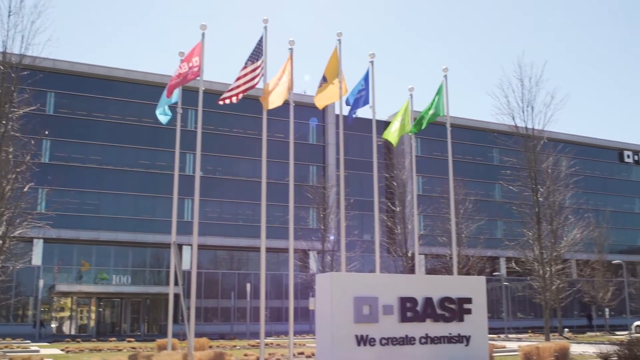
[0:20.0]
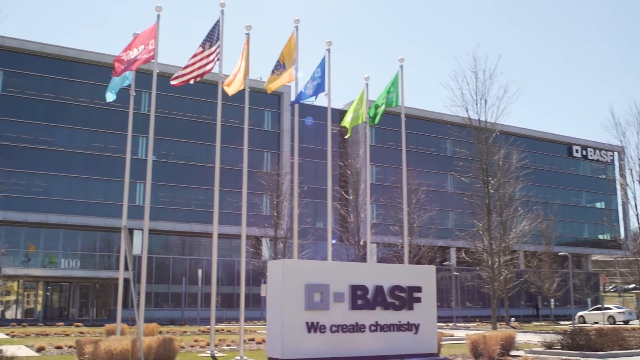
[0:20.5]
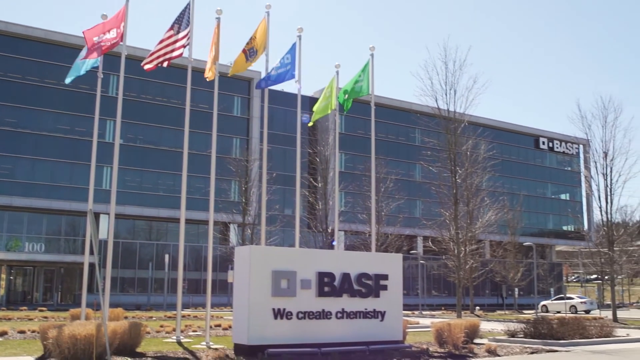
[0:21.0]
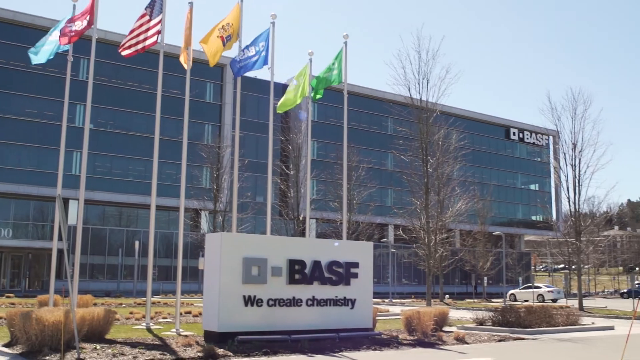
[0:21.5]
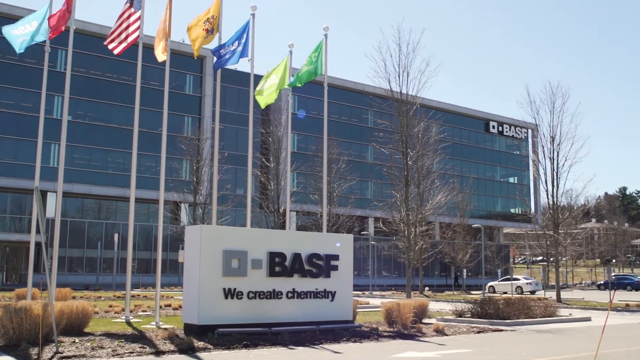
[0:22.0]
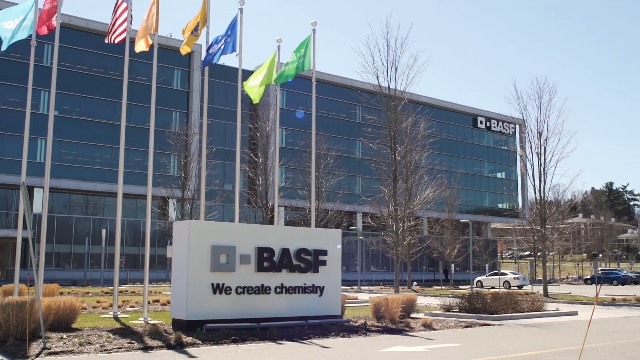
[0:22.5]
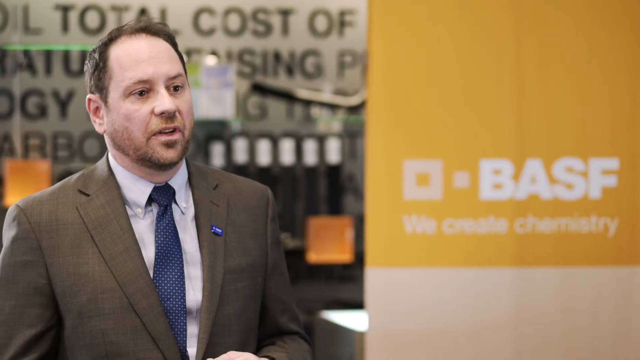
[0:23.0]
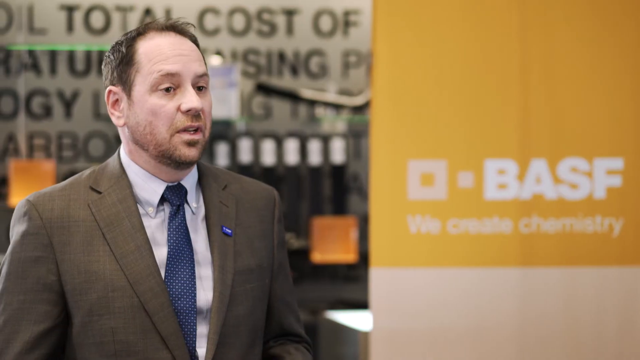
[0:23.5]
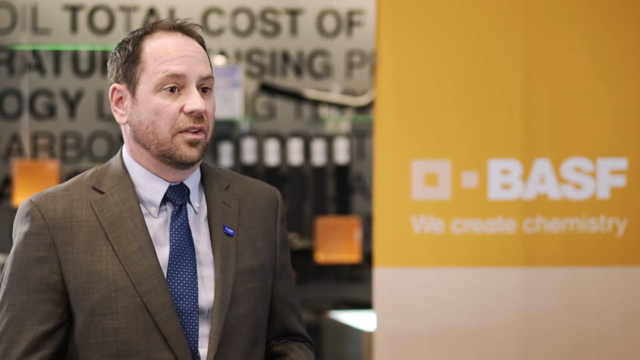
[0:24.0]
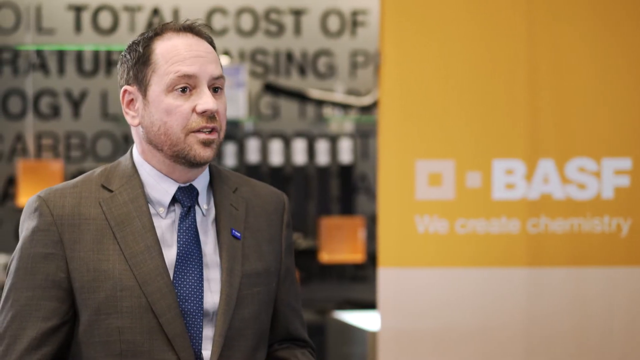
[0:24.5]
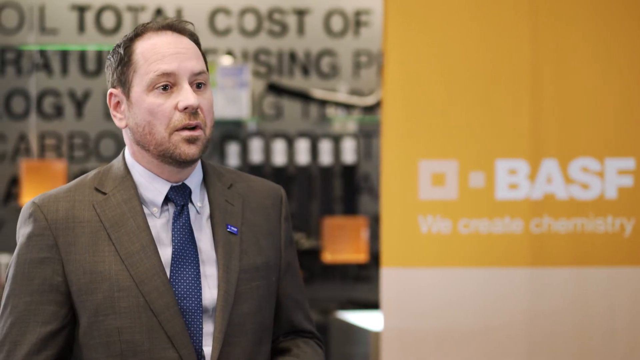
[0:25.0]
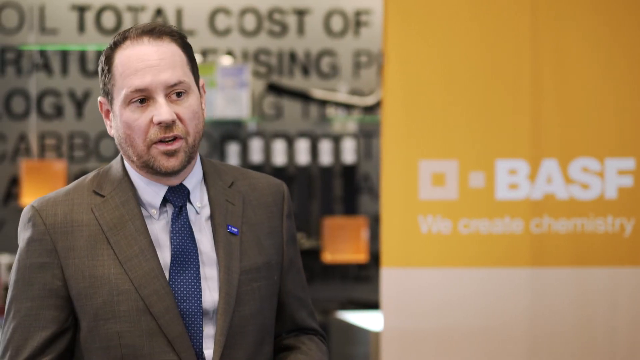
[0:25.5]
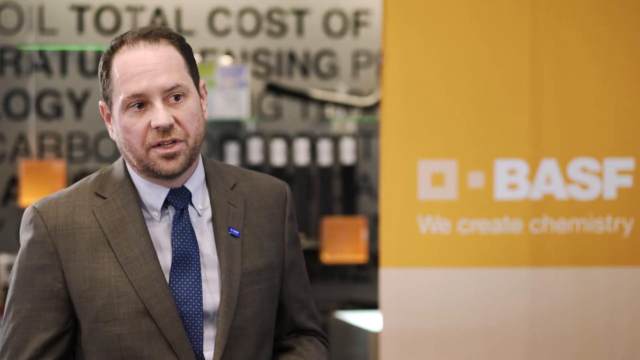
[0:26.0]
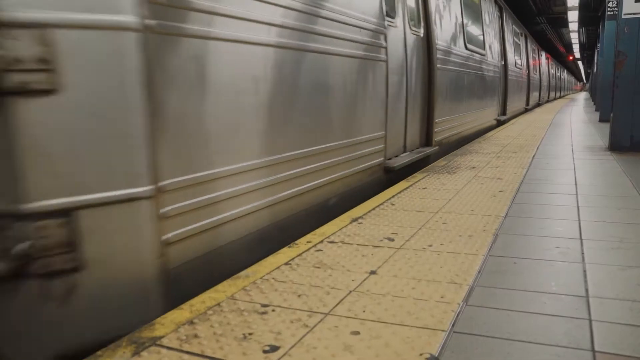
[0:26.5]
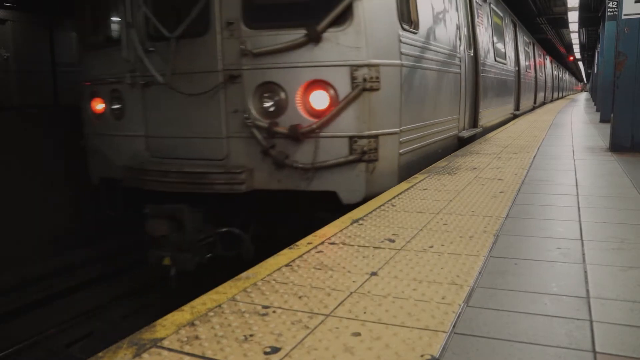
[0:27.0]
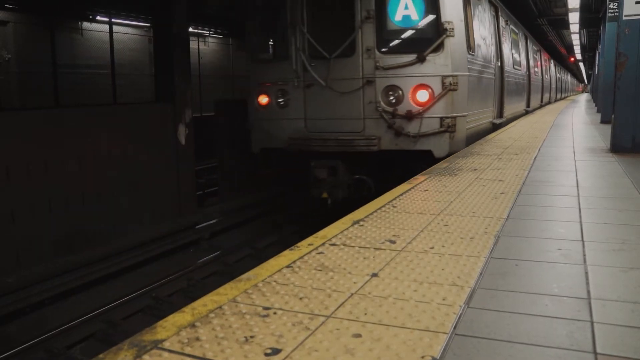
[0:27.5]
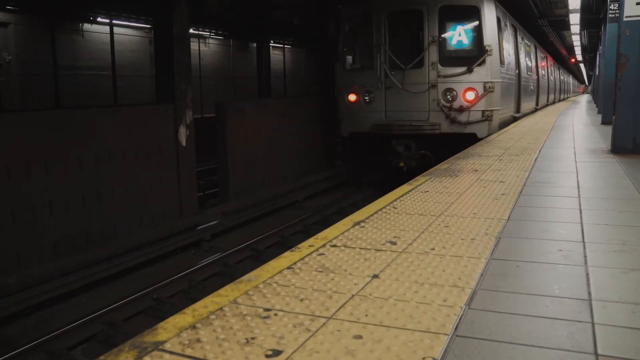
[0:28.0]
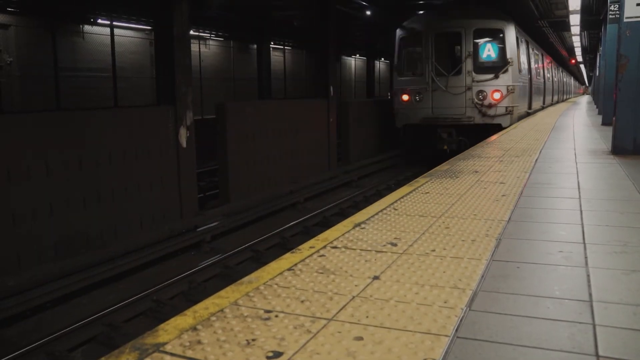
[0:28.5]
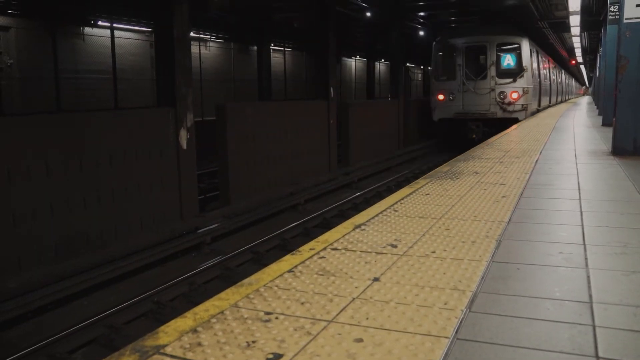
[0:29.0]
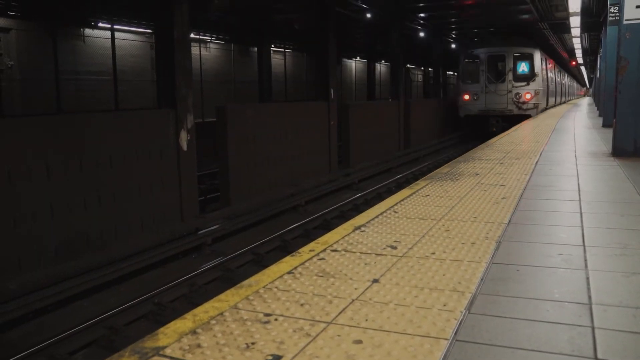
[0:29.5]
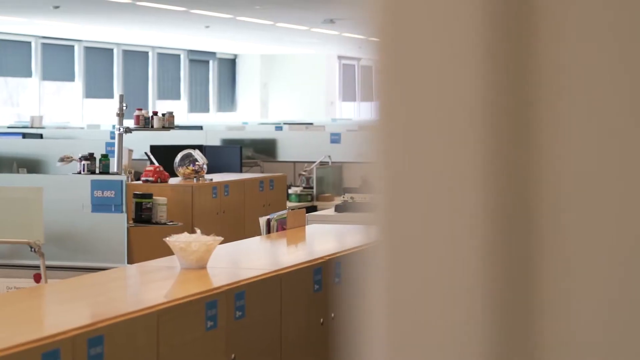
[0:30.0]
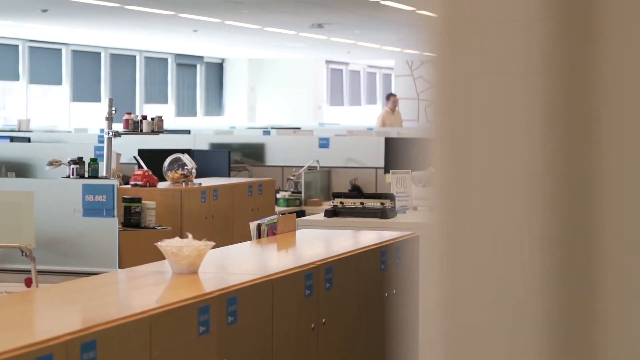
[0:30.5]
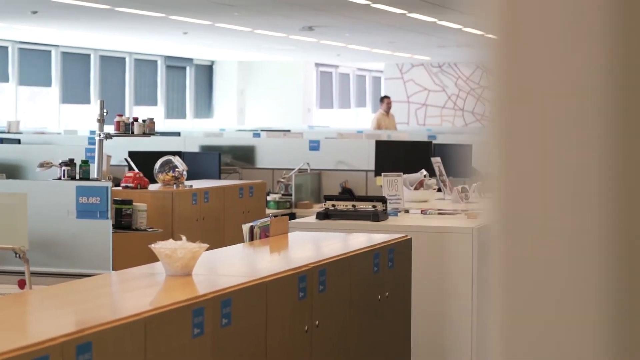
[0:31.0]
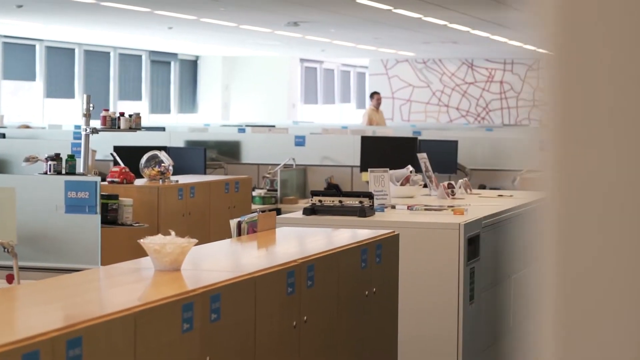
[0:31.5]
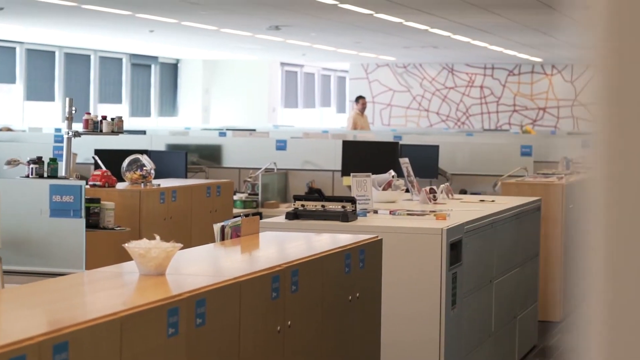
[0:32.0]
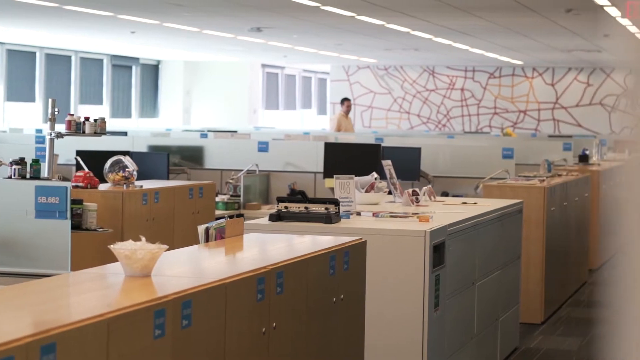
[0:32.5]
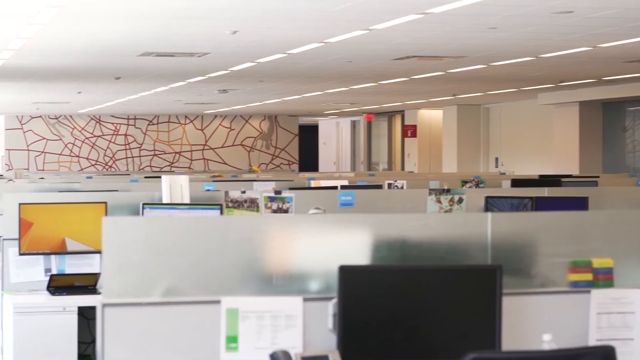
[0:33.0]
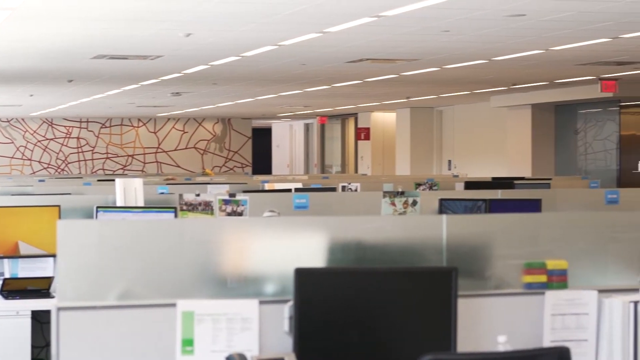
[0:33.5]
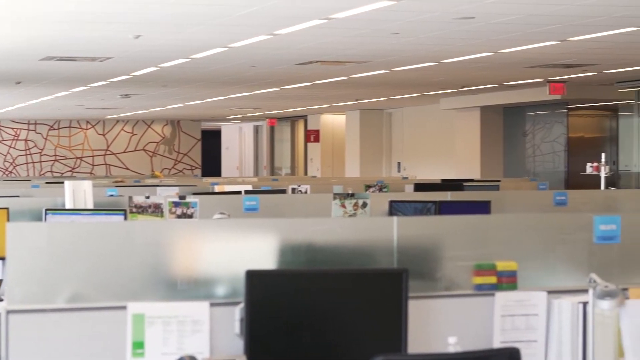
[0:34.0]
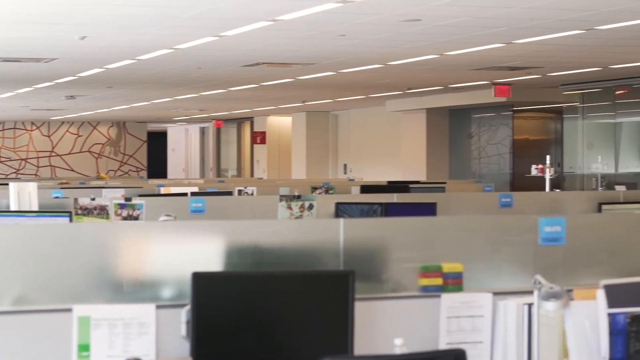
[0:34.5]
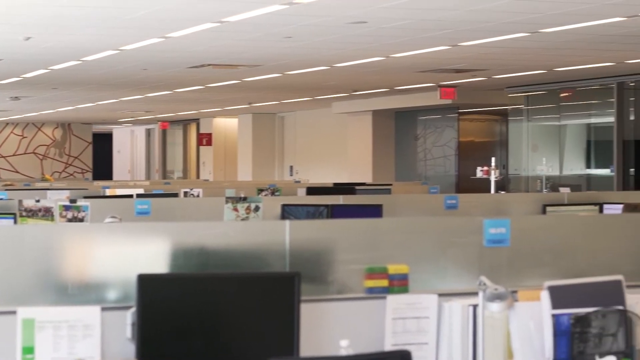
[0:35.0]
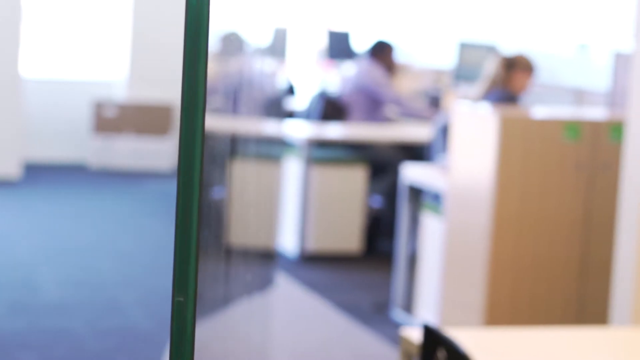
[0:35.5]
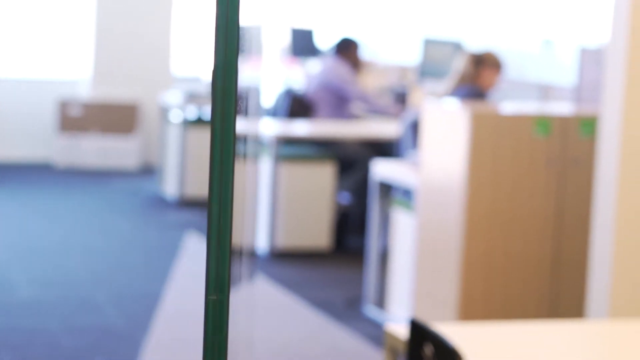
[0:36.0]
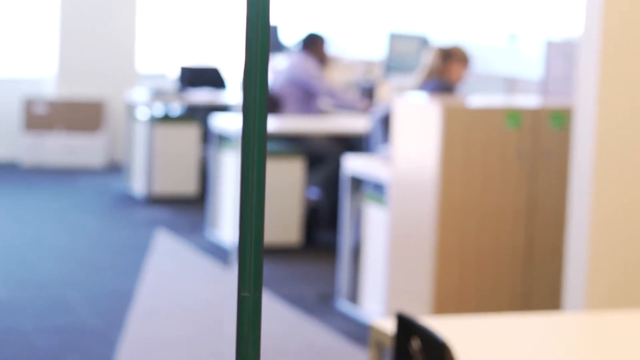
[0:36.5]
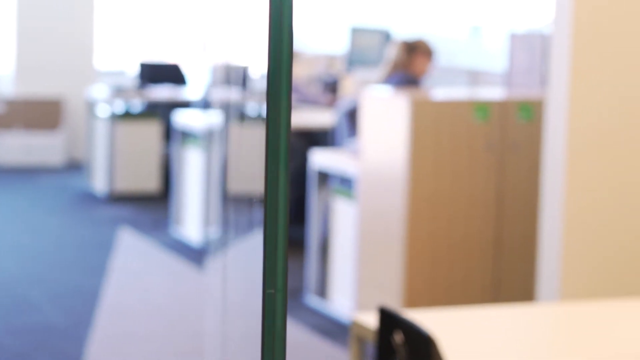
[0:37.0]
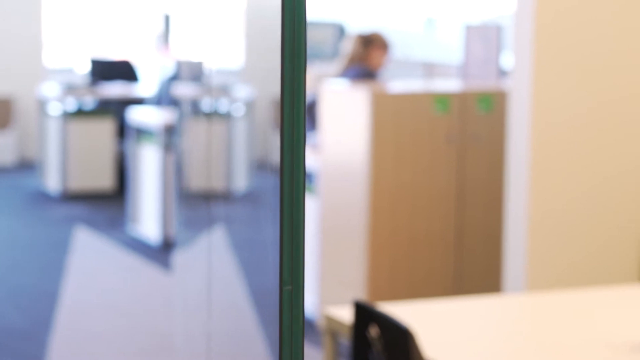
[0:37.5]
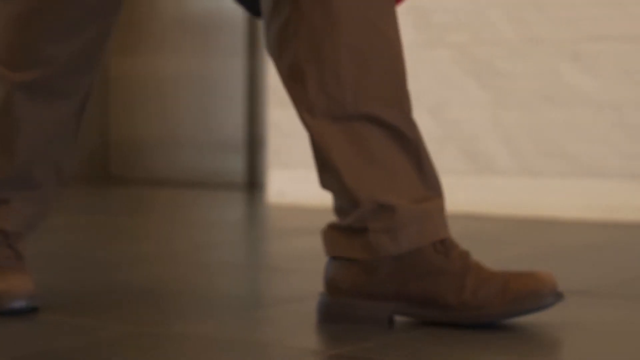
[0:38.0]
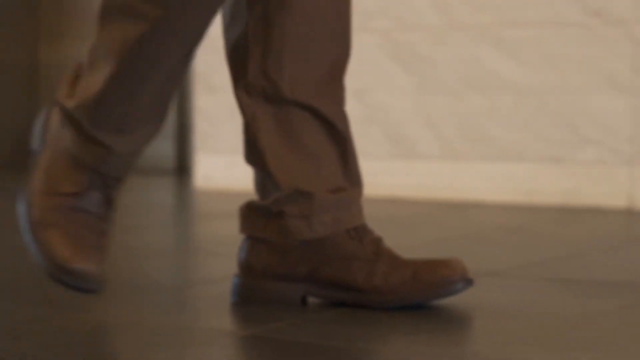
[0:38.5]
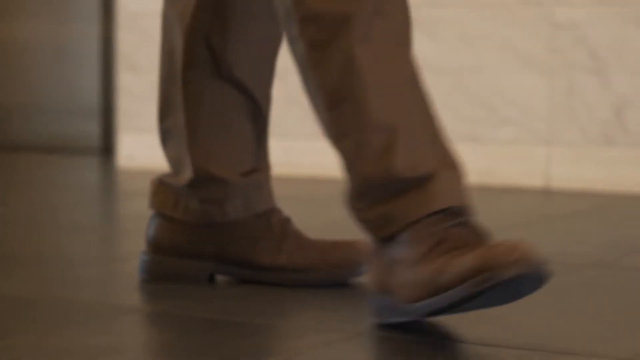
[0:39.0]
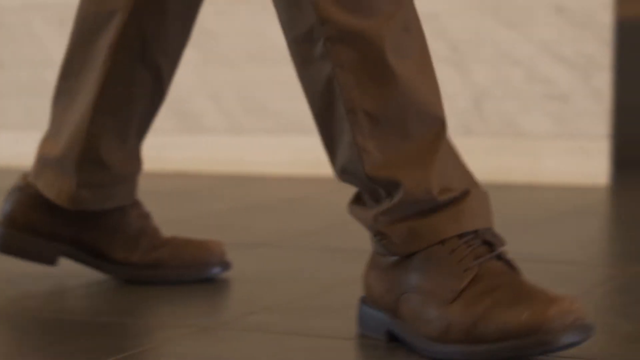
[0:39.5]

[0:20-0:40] A well-built building with some white structures is full of people, both on the upper level and at the bottom. The company name BASF appears on screen with "we create chemistry" underneath, apparently a chemistry company. A screen shows departure times, including for the Thallium Line, and the place looks like a train station where people can buy tickets and board trains. A man who looks to be in his 40s, Doyle Robertson, is talking; he works for BASF Corporation as an expert on melamine foam in North America. People discuss something on a computer monitor: two women and one man are in front, with other people working in the background. Eight flags are on the BASF company building, and a train passes by.